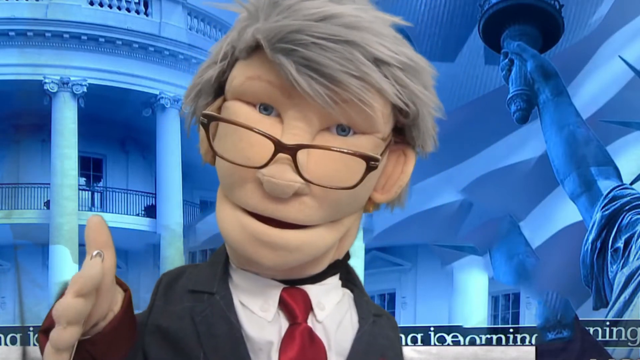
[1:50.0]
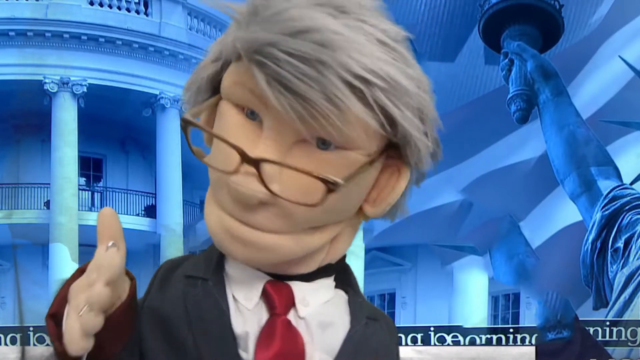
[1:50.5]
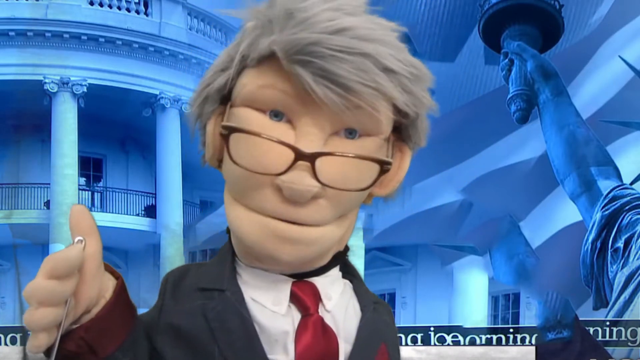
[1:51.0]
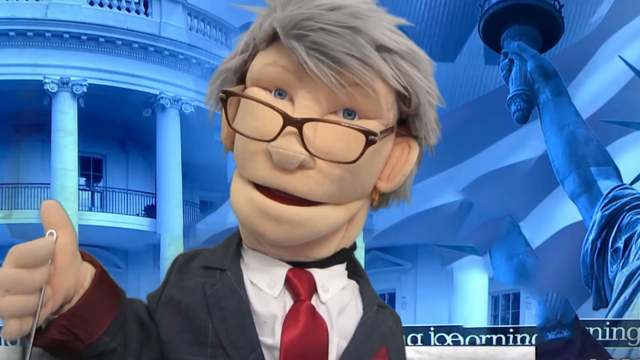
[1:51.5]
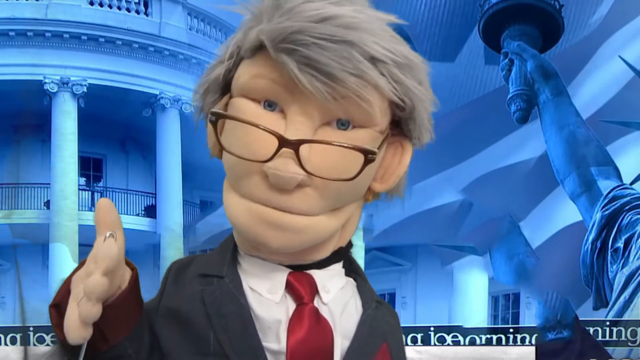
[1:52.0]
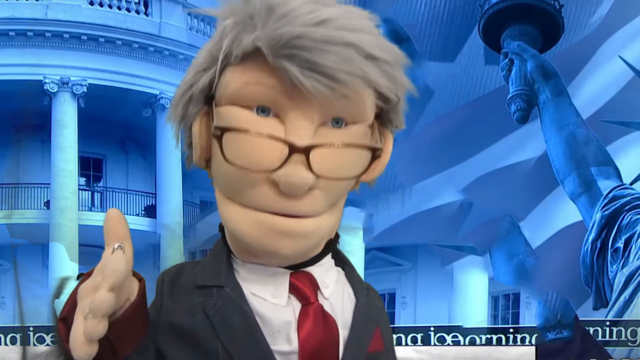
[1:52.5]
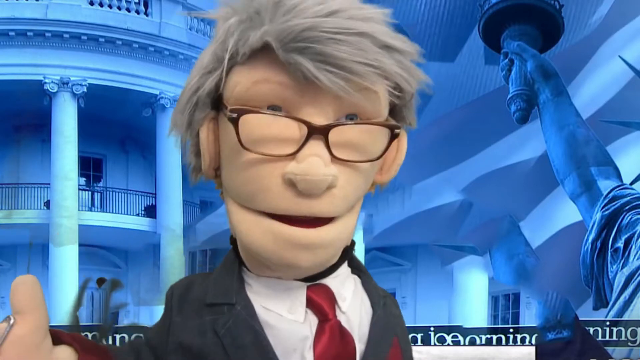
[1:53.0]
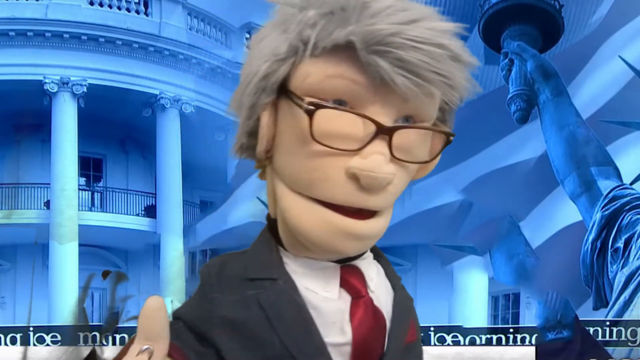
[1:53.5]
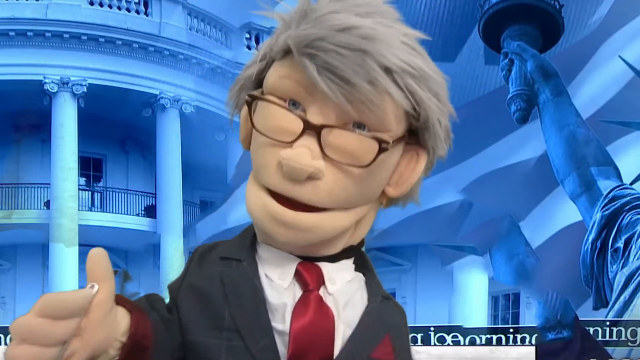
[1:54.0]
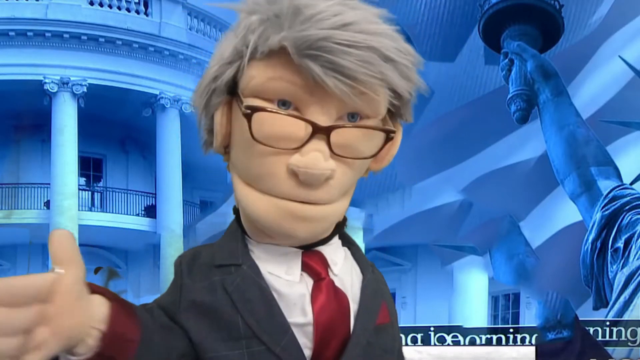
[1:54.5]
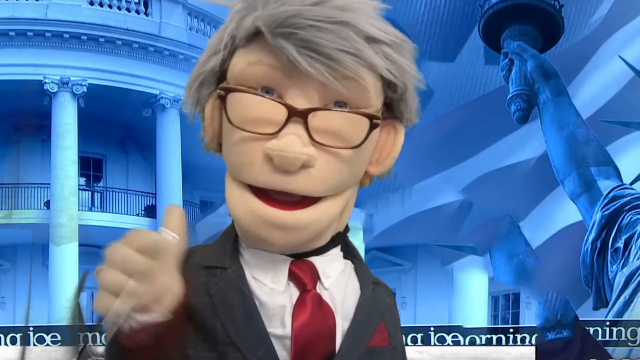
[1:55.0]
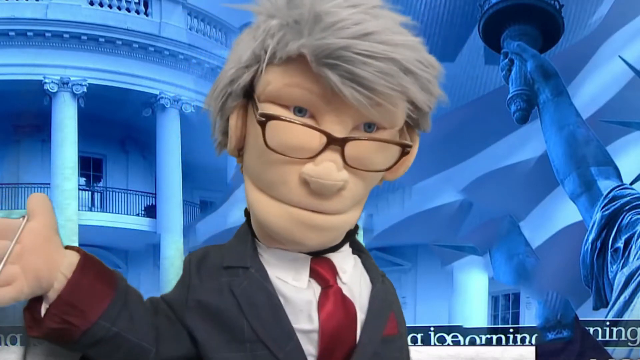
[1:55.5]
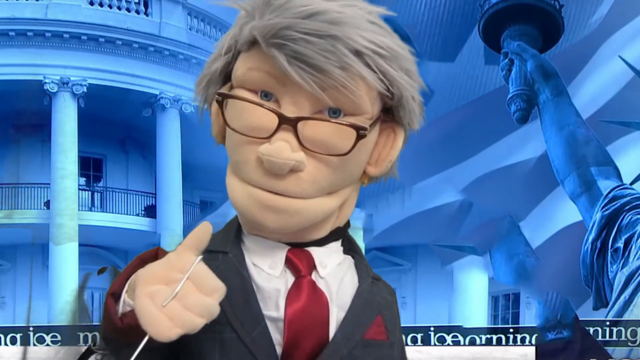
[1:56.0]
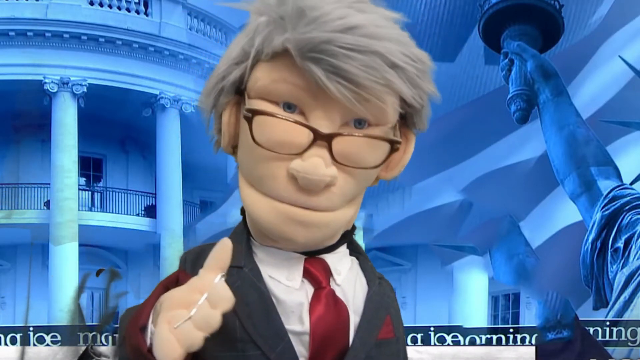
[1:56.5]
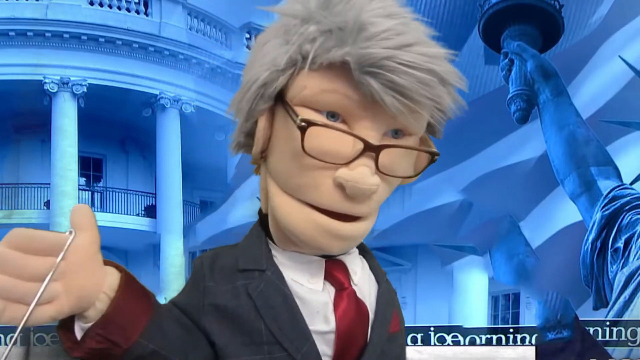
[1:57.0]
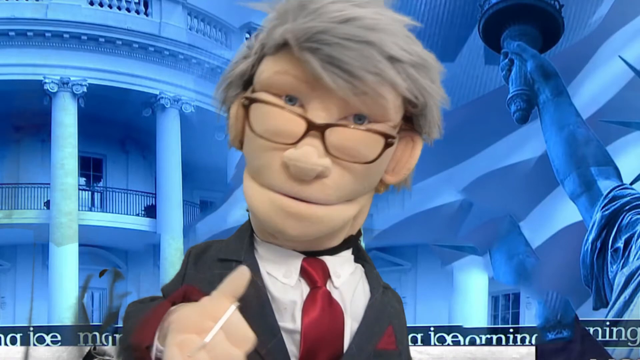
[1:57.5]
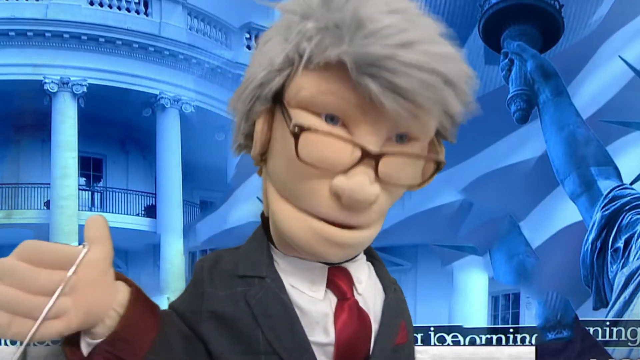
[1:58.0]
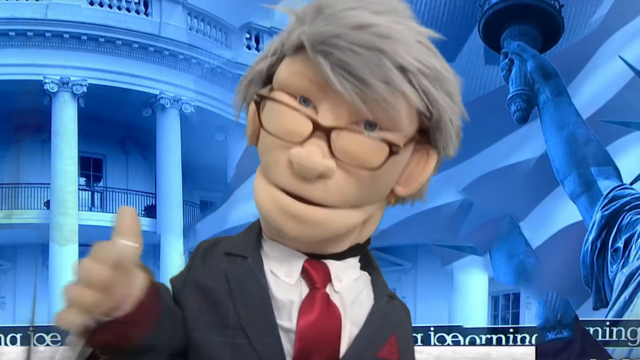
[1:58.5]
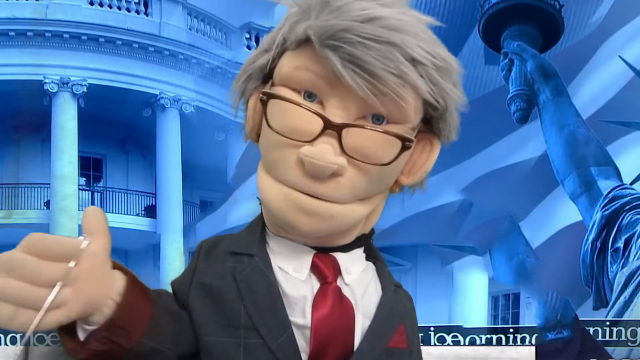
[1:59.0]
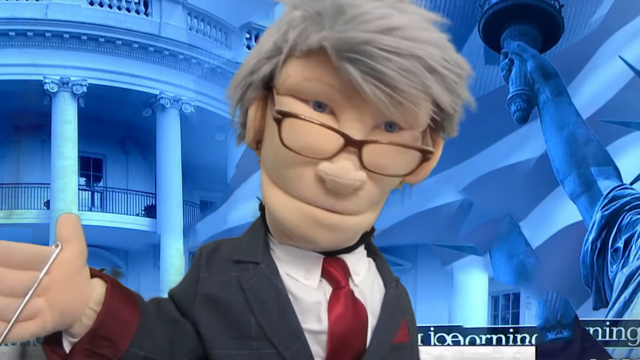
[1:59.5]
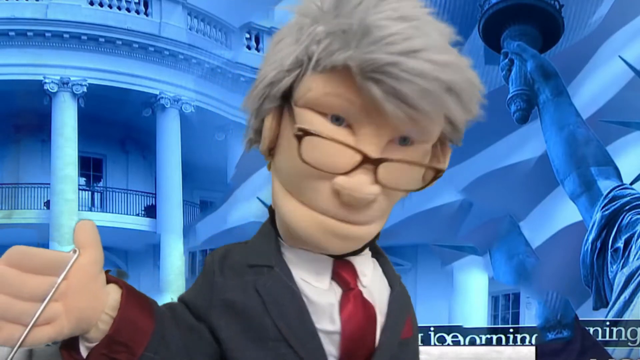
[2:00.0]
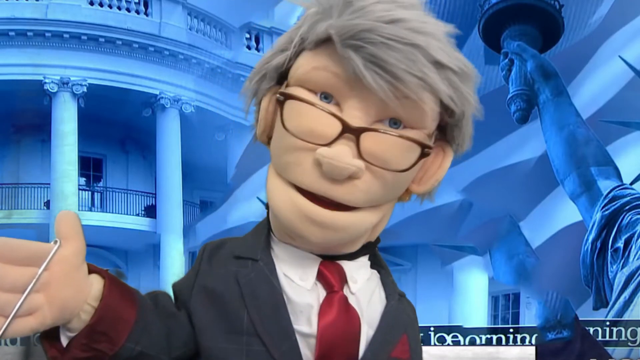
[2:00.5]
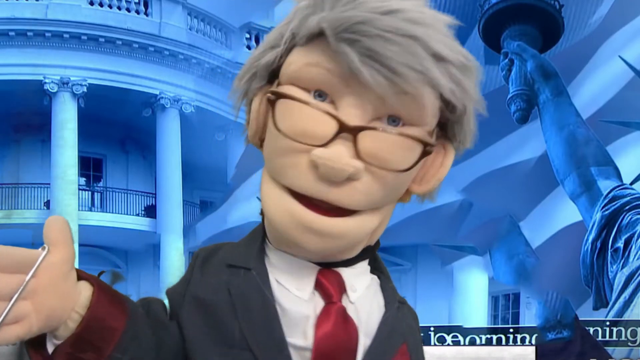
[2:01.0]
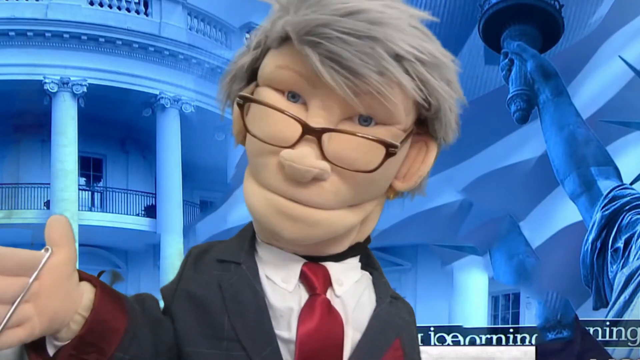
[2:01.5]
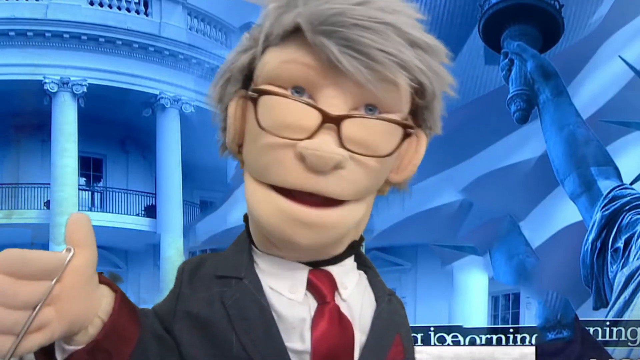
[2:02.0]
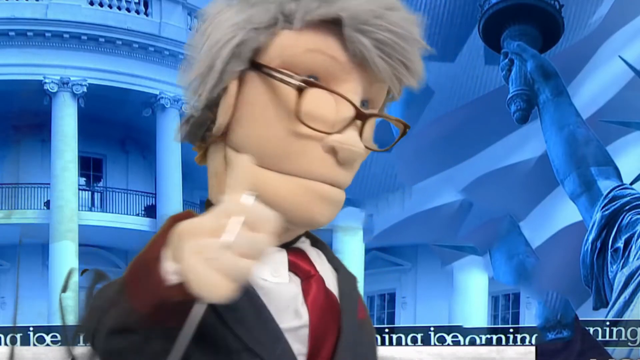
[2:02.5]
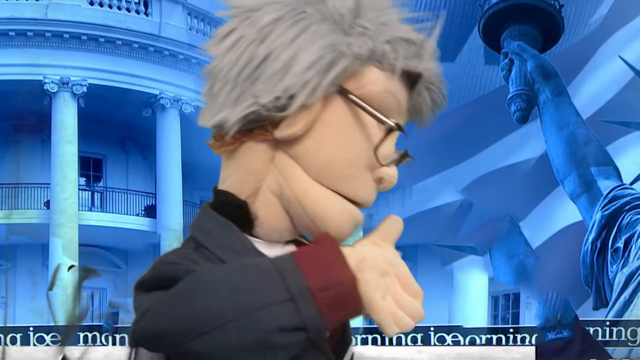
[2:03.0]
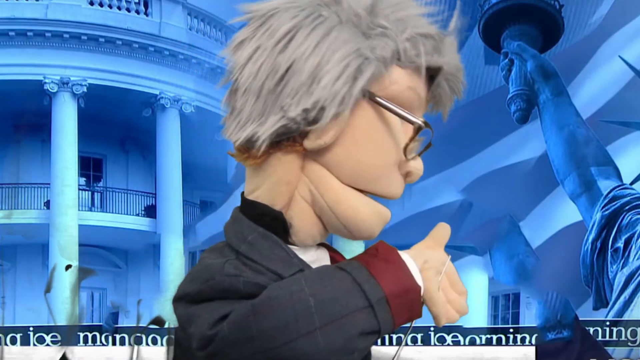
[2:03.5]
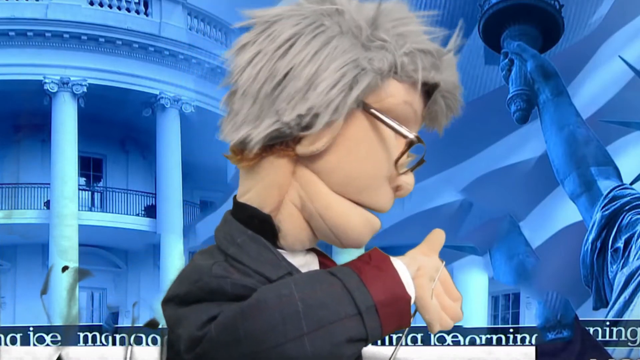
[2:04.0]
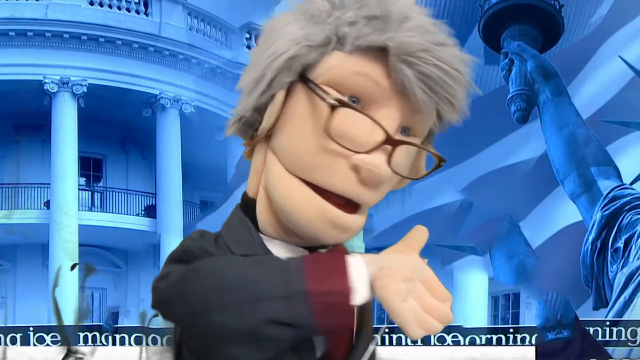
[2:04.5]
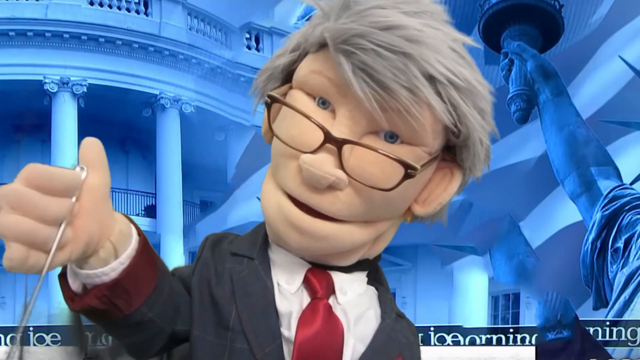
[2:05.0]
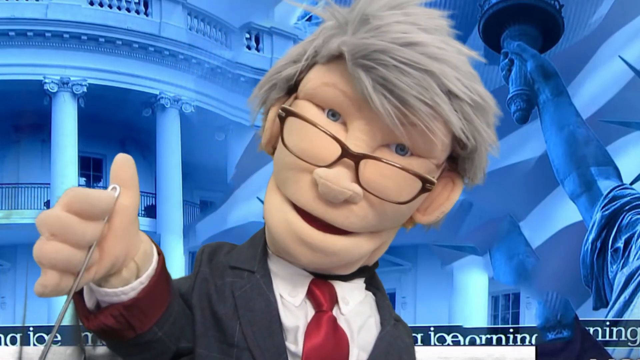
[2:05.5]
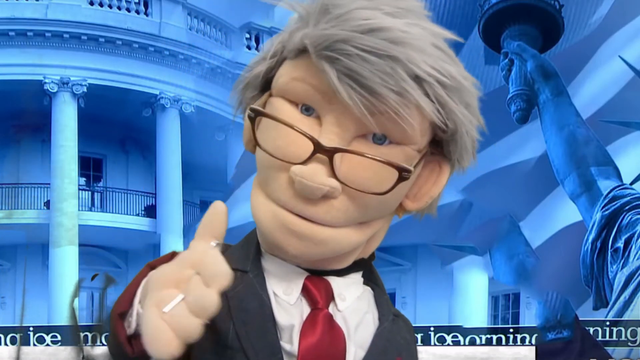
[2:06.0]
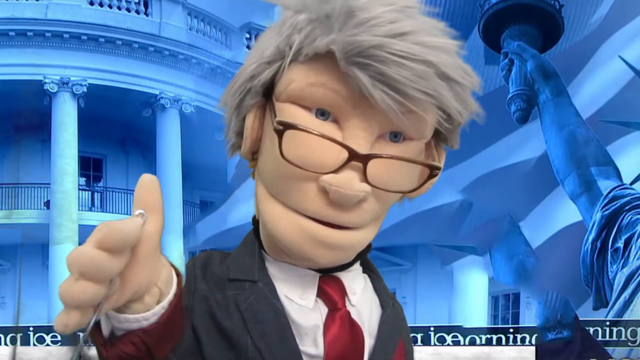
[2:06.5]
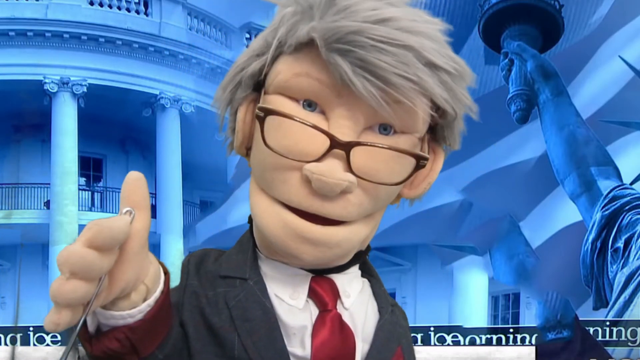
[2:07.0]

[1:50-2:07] A man with glasses talks directly to the camera with a very serious look on his face, giving exaggerated reactions. He wears a white tie and a black and white suit. The background shows the Statue of Liberty and the White House. Various elements are in the bottom right-hand section of the screen, including a logo in the shape of the statue's banner.